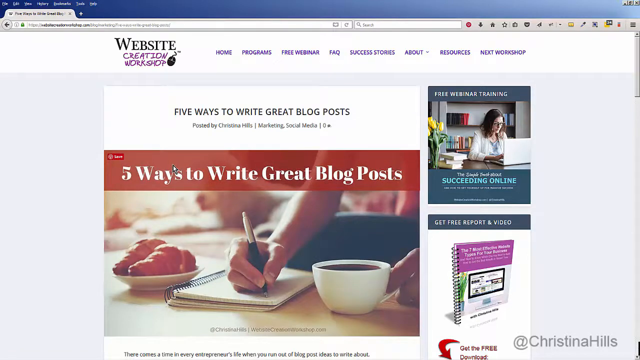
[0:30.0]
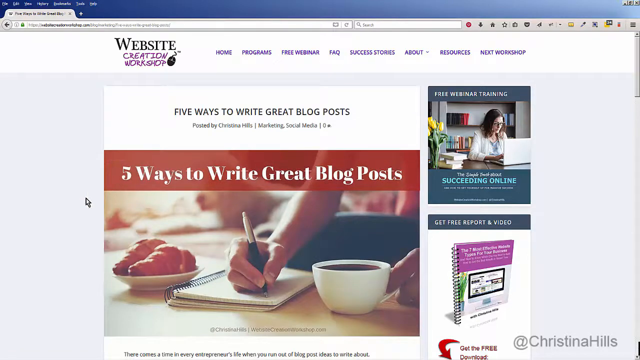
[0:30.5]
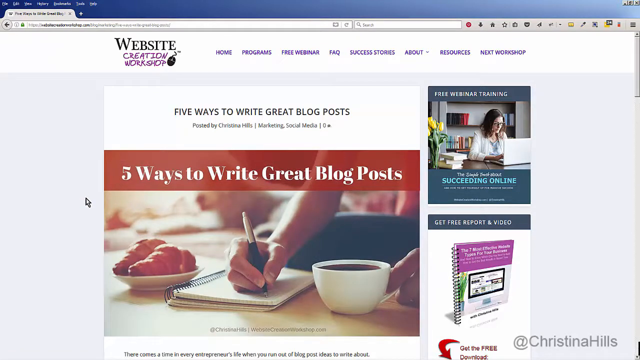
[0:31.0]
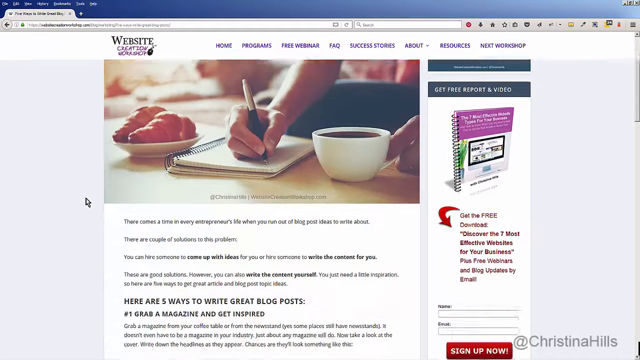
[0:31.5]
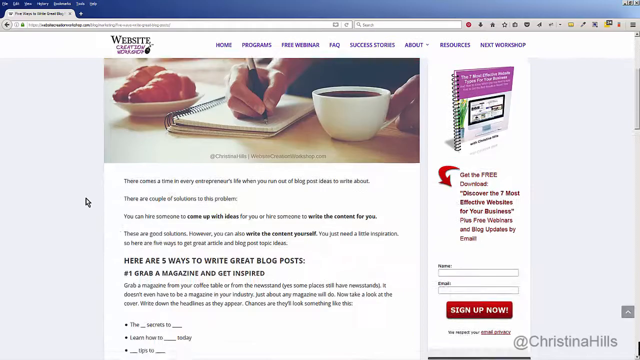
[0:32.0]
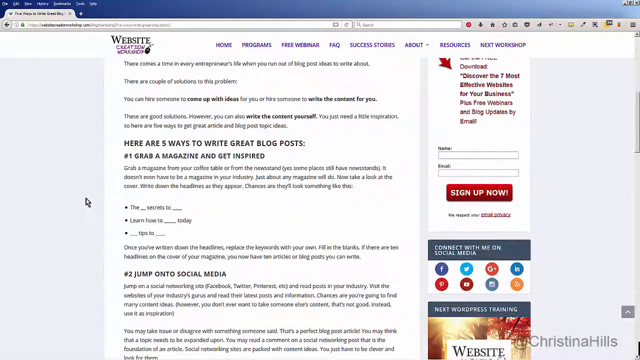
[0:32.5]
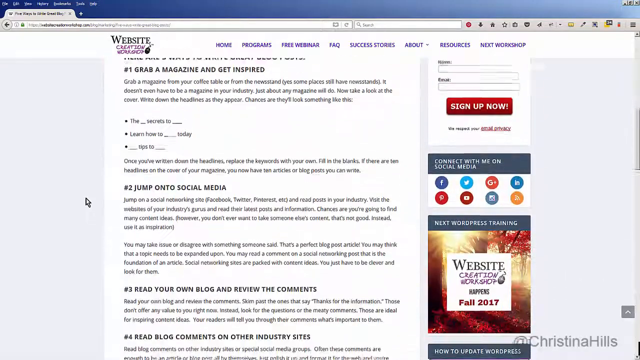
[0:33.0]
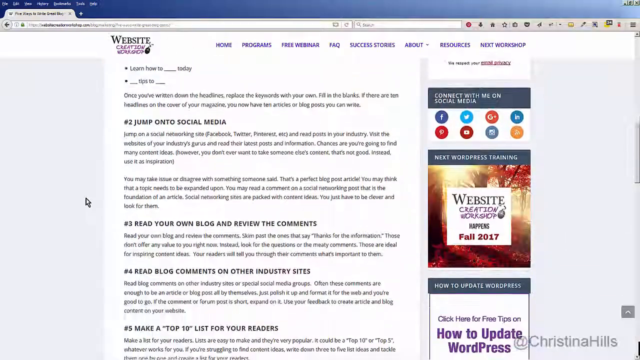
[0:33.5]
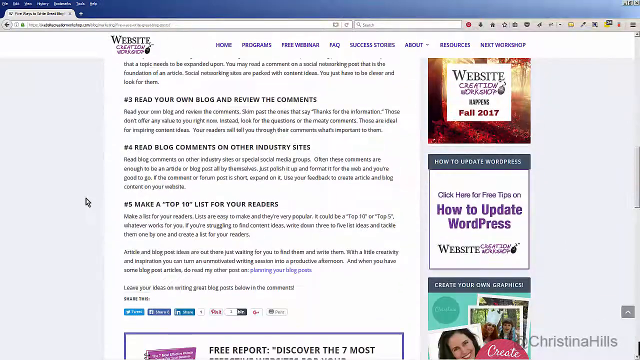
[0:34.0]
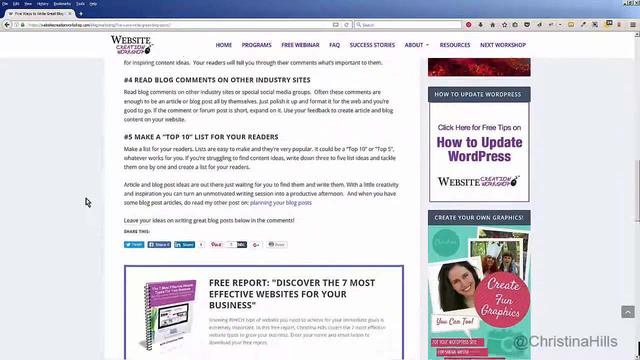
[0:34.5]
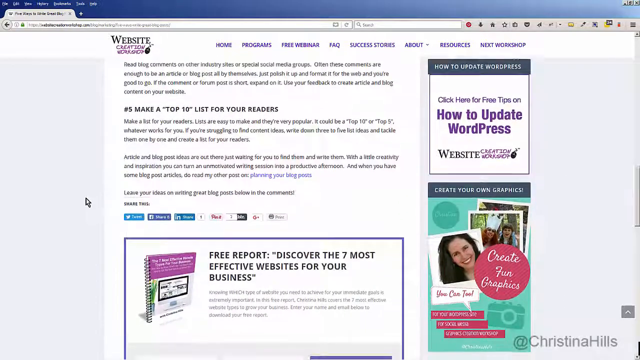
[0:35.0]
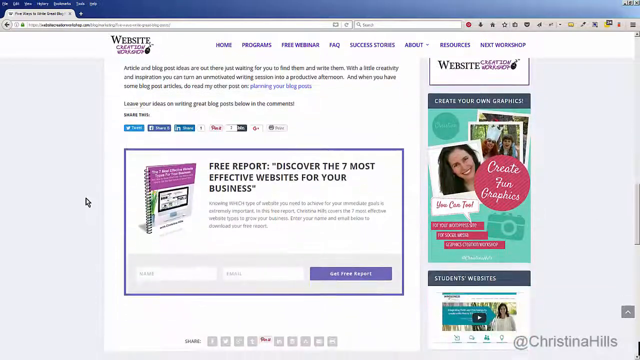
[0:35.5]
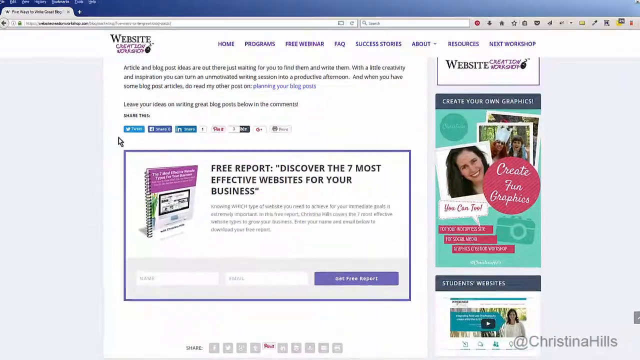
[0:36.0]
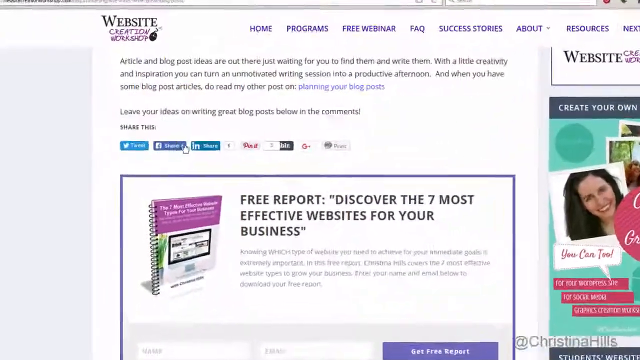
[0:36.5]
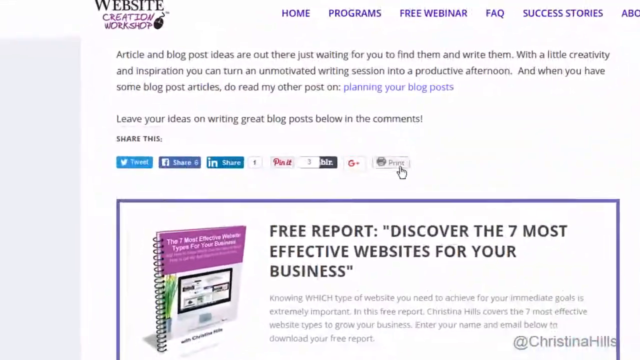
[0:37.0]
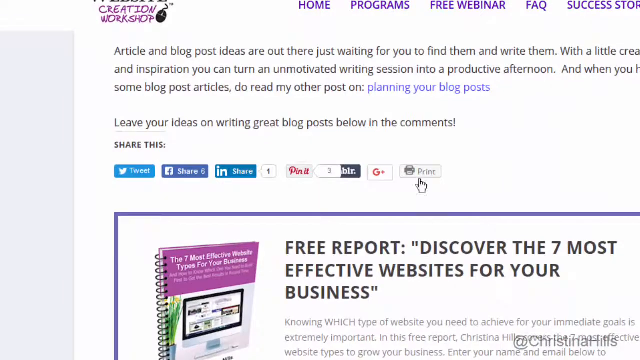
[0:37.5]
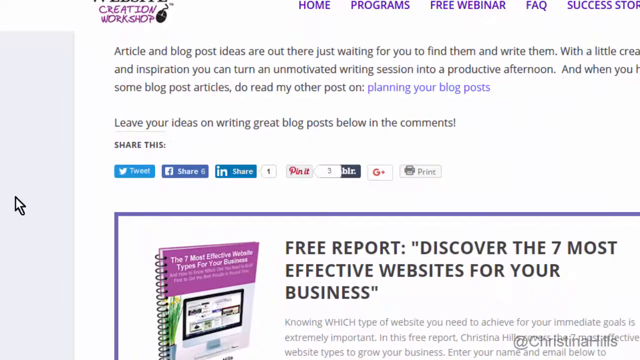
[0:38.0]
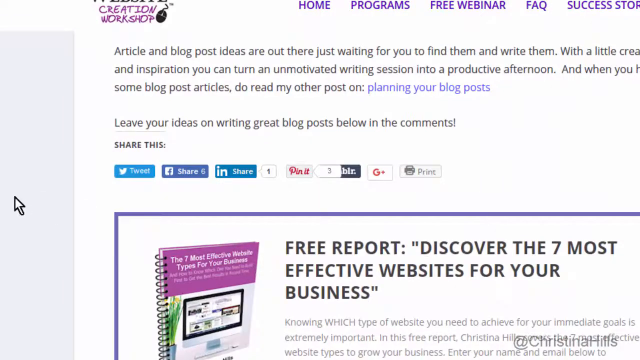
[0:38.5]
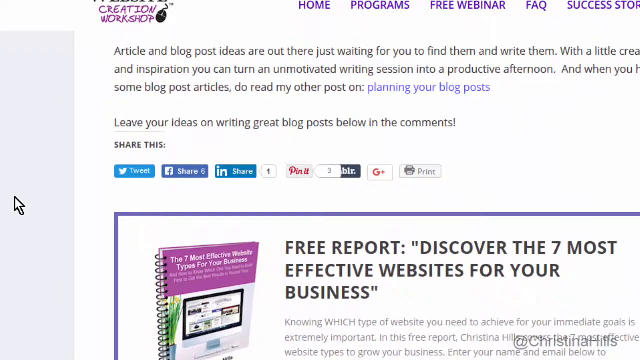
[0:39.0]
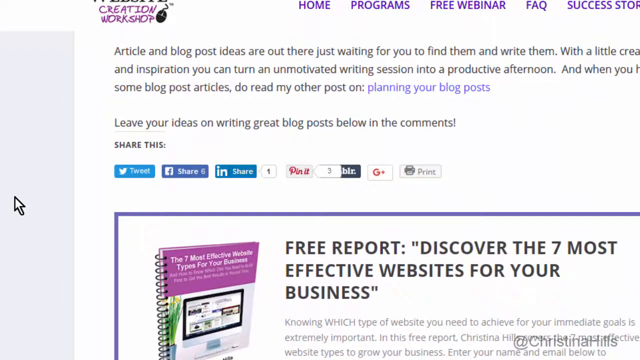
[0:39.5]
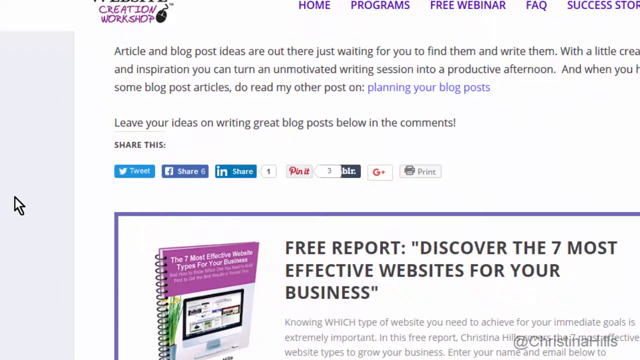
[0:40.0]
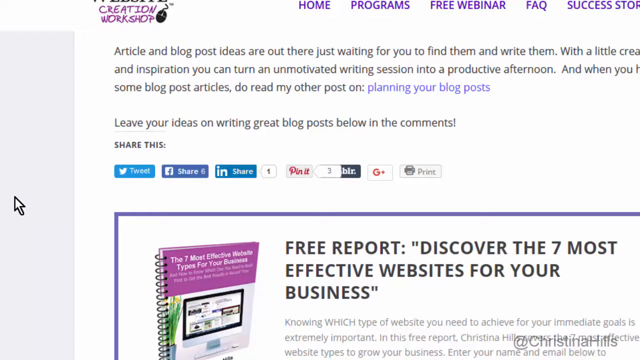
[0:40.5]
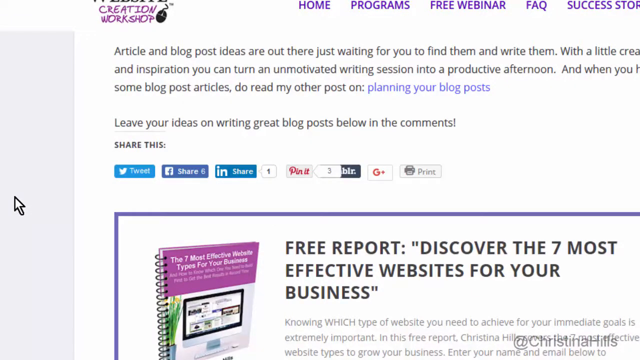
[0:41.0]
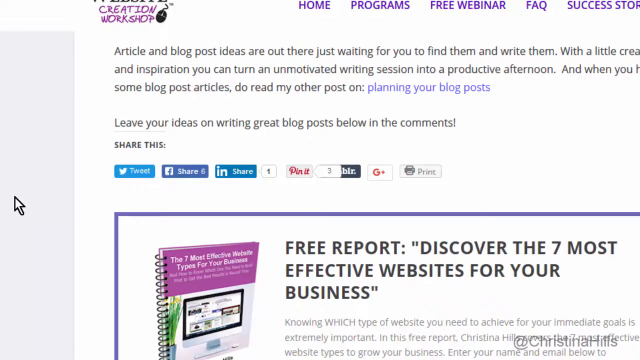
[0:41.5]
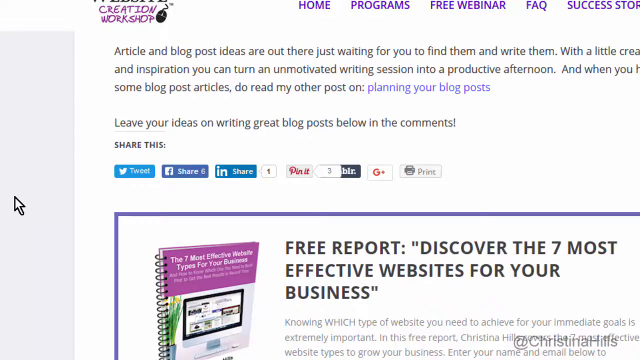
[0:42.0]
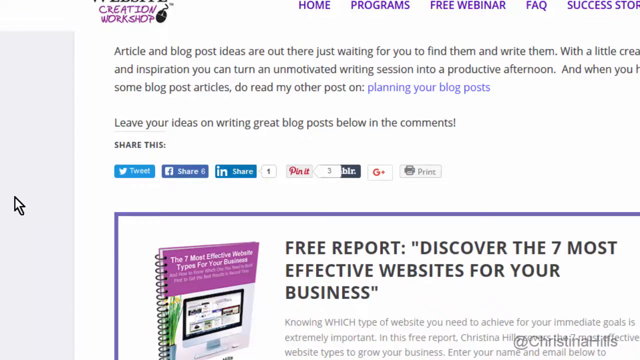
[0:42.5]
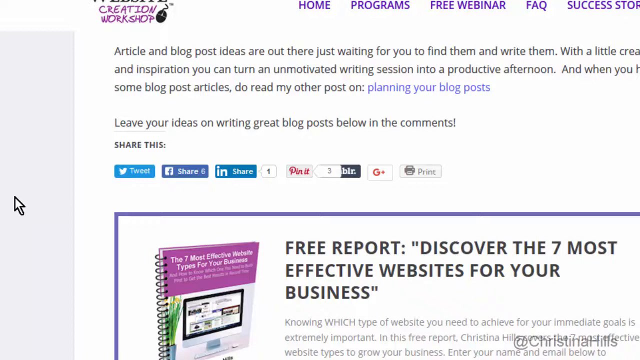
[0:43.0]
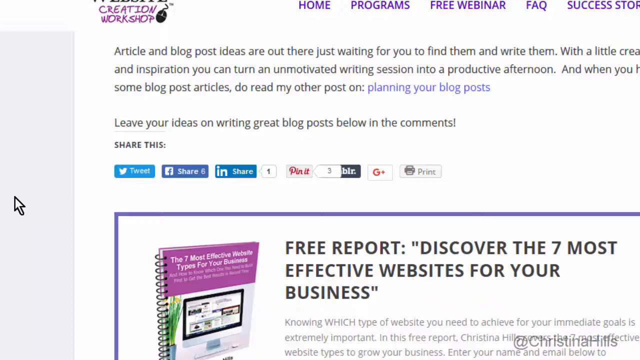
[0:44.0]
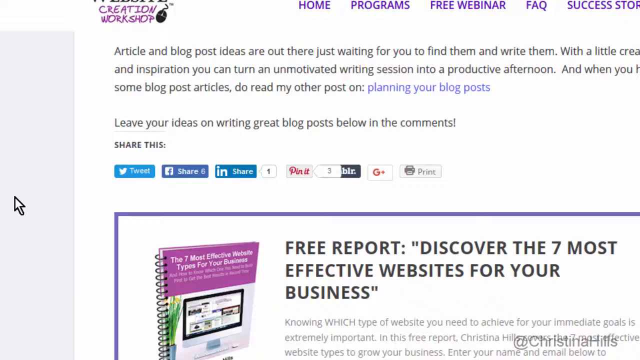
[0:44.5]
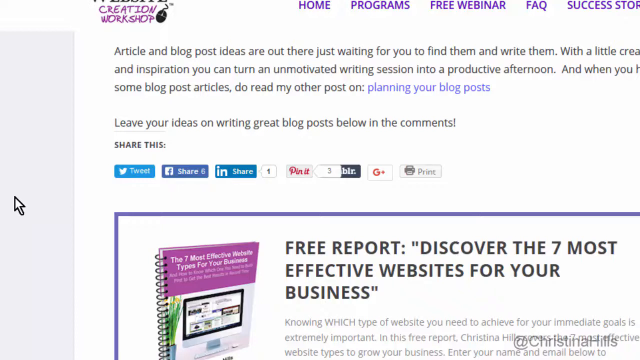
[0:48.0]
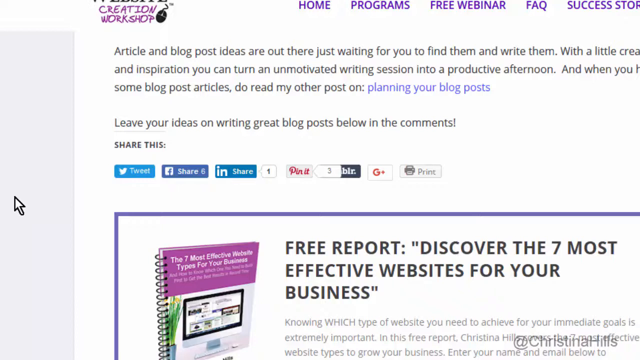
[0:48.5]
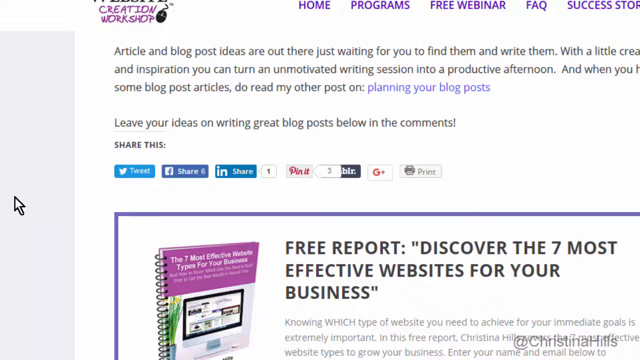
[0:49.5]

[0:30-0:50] Someone scrolls down an article posted on a website called the Website Creation Workshop. At the top is the article title "5 Ways to Write Great Blog Posts." Below it is a photograph of someone holding a pen in their right hand and writing in a notebook on the table in front of them; in their left hand they hold a white coffee cup filled with coffee, and on the table on the left side of the screen is a white plate with two croissants. As the user scrolls through the article, each of the five items is highlighted with a number and a hashtag: grab a magazine and get inspired, jump onto social media, read your own blog and review the comments, read blog comments on other industry sites, and make a top ten list for your readers. At the bottom of the page is an ad for a free report called "Discover the 7 Most Effective Websites for Your Business," with a photo of a copy of a guide next to the title. The camera zooms in to the top of the ad and to the icons of social media sites where the article can be shared. The cursor arrow moves over these icons and then pauses on the left side of the screen.